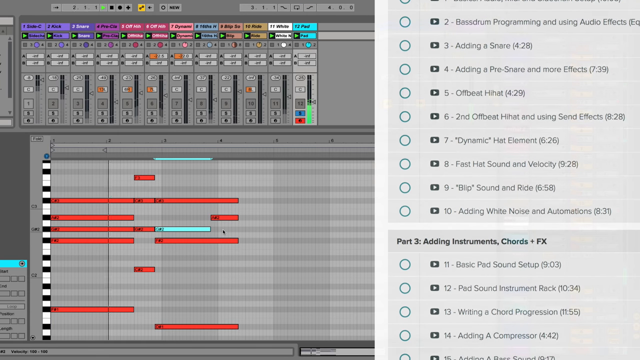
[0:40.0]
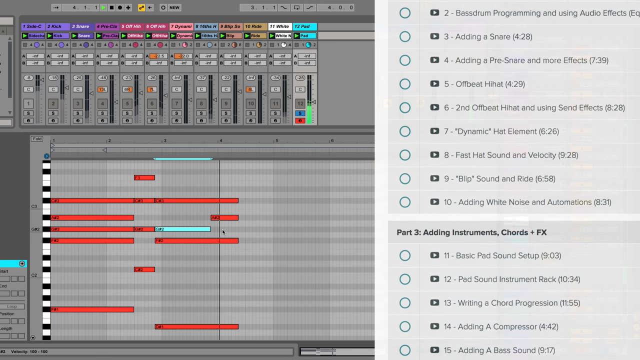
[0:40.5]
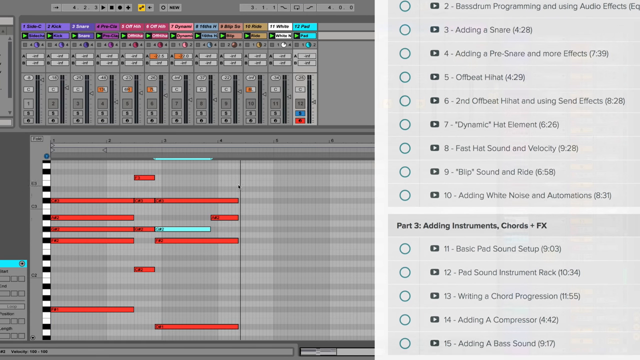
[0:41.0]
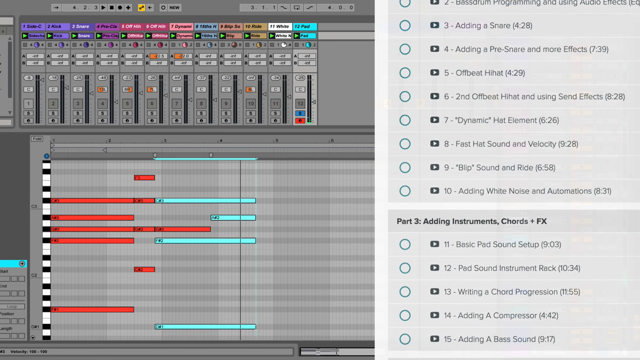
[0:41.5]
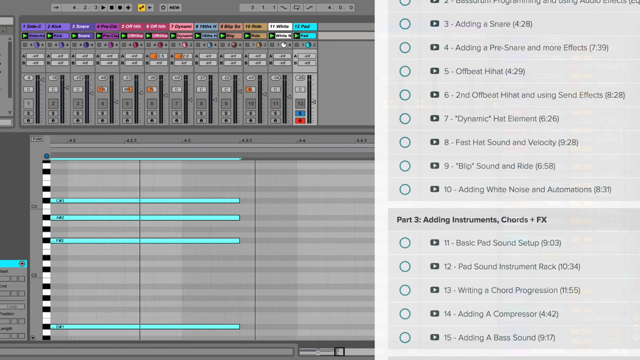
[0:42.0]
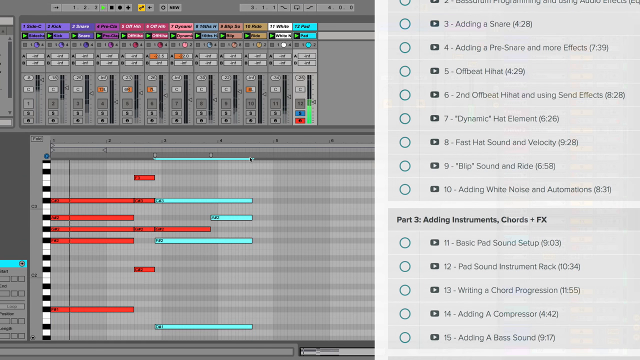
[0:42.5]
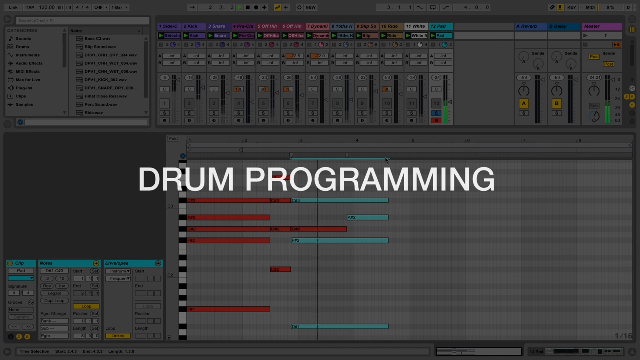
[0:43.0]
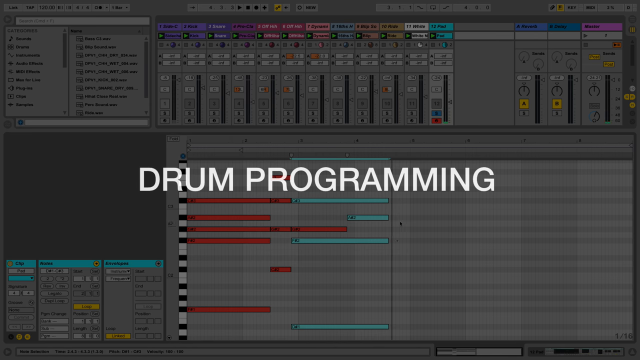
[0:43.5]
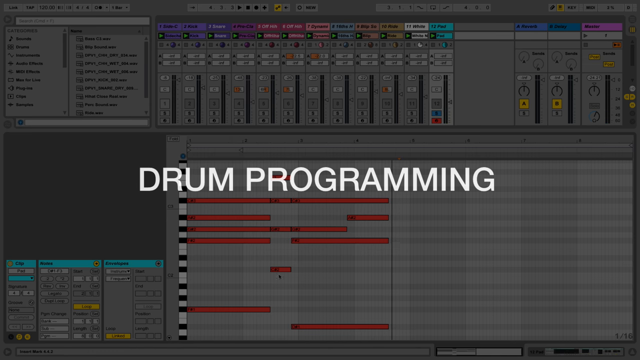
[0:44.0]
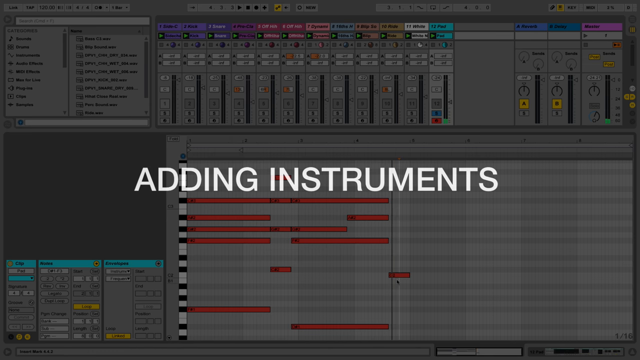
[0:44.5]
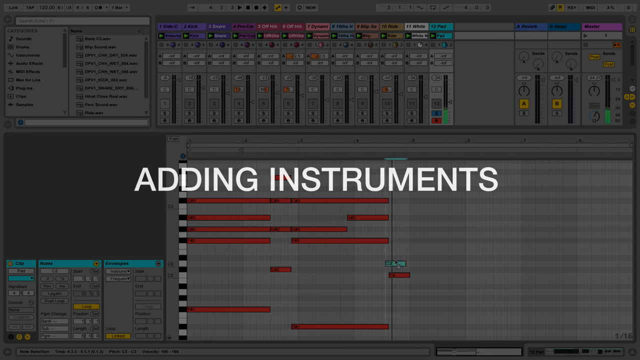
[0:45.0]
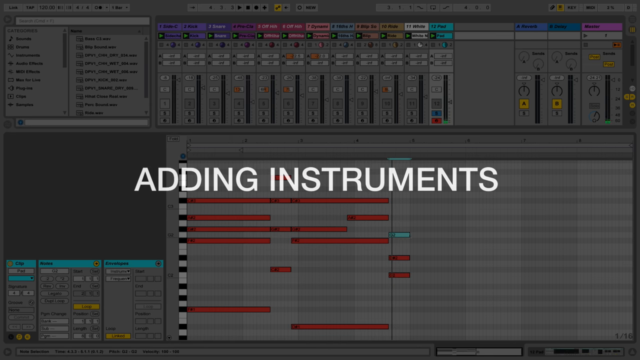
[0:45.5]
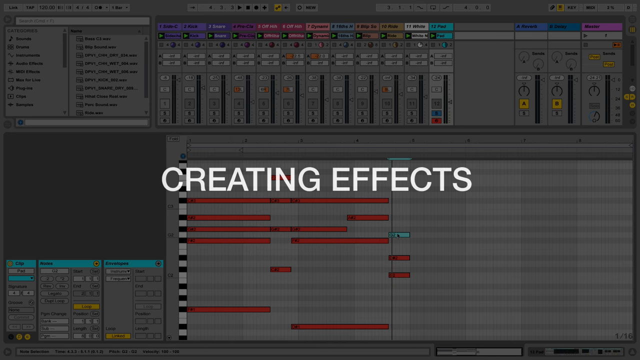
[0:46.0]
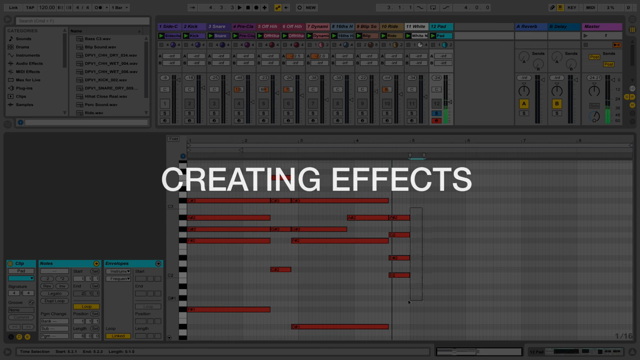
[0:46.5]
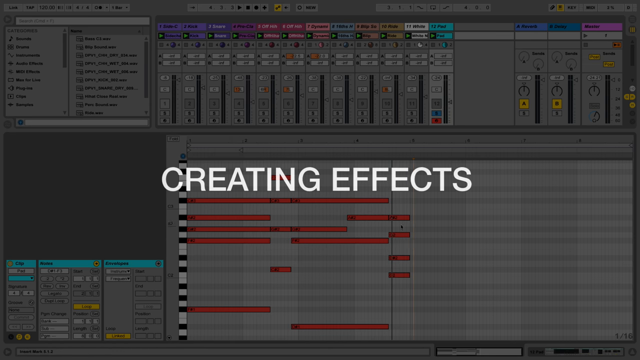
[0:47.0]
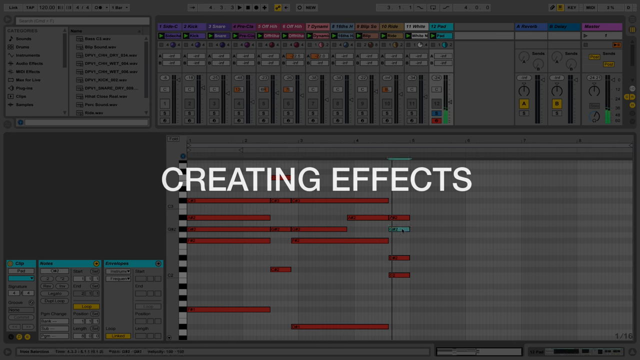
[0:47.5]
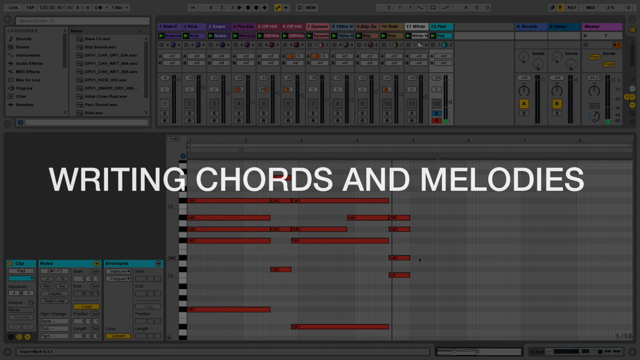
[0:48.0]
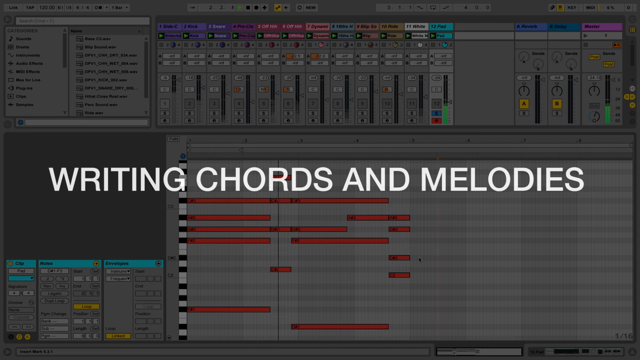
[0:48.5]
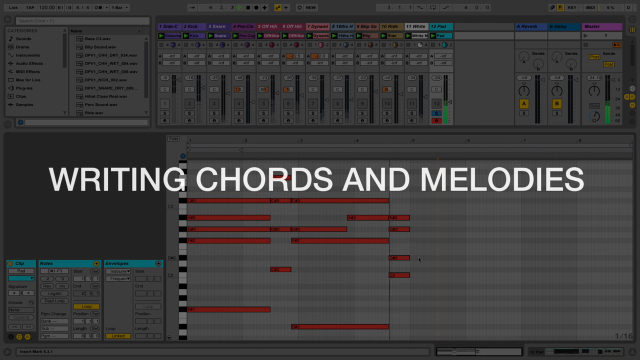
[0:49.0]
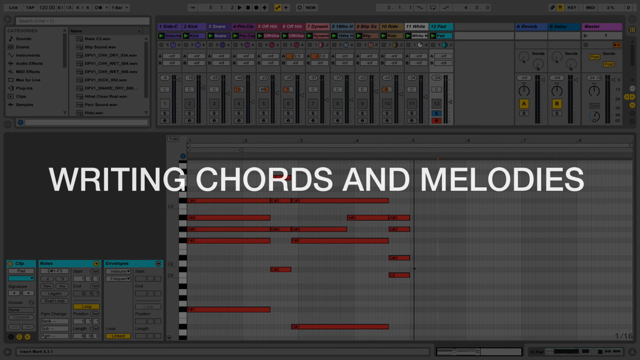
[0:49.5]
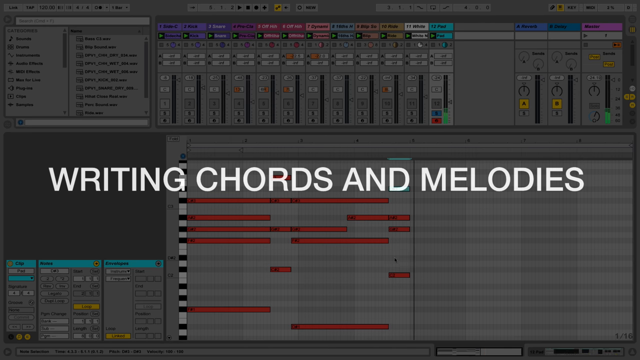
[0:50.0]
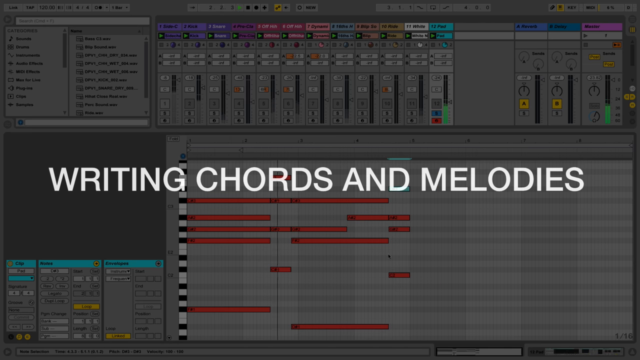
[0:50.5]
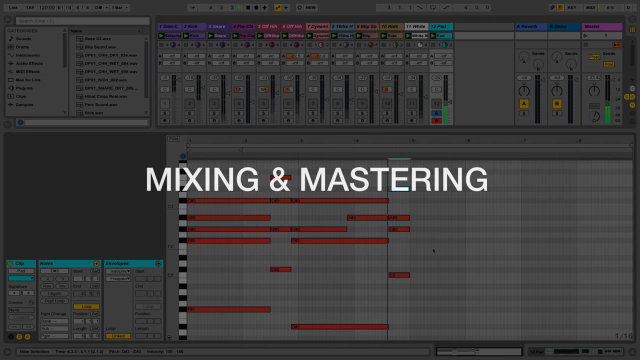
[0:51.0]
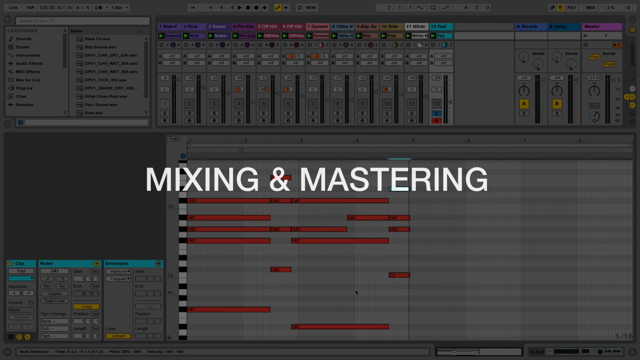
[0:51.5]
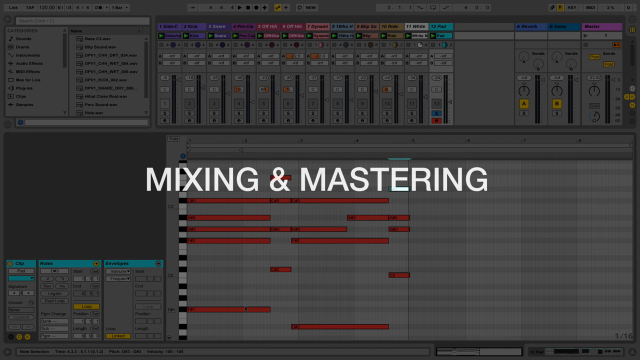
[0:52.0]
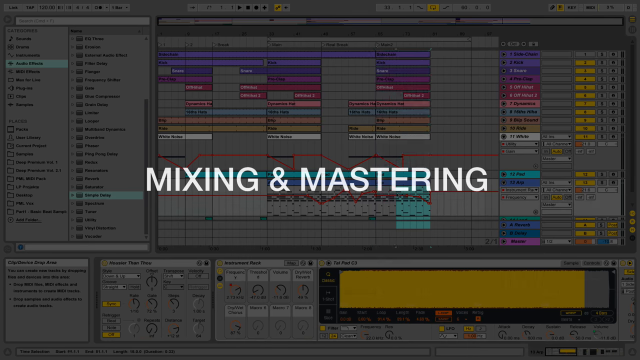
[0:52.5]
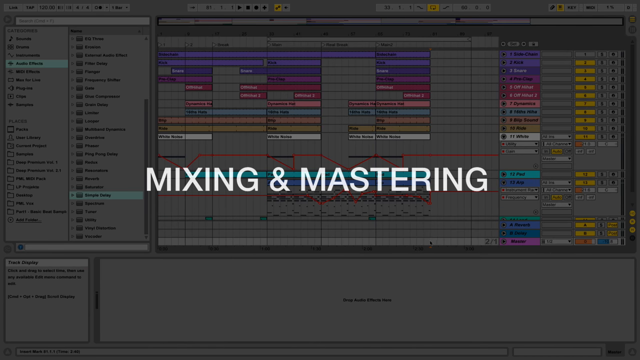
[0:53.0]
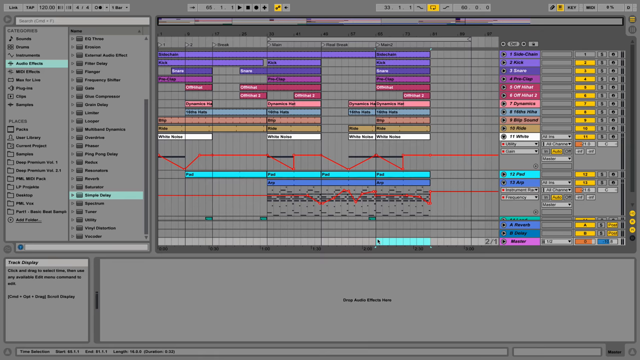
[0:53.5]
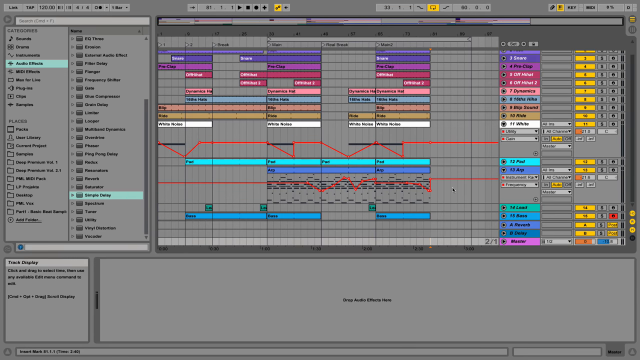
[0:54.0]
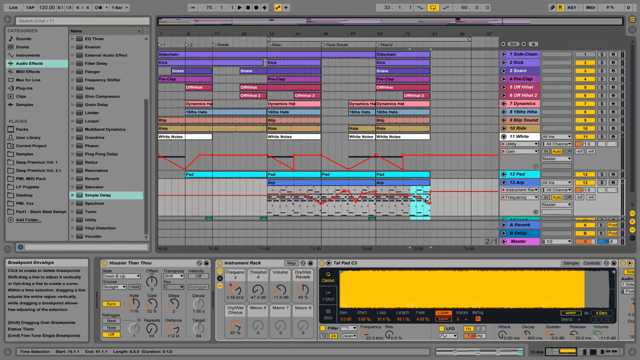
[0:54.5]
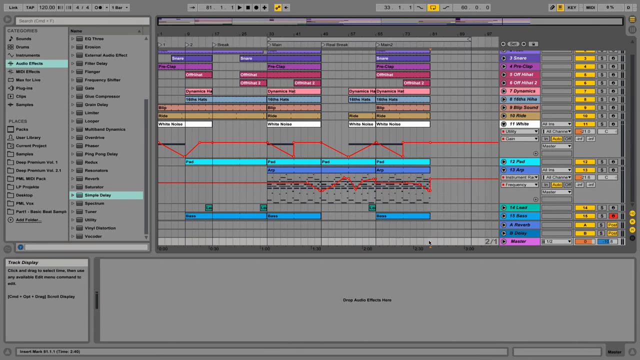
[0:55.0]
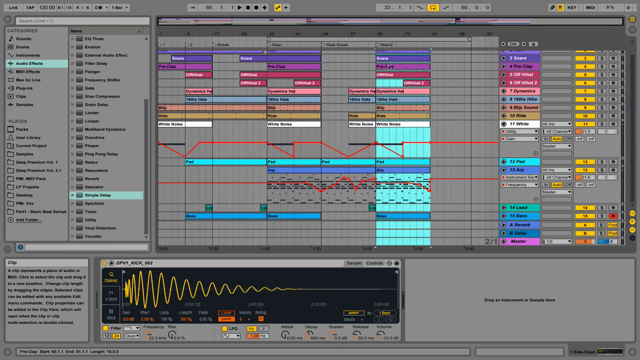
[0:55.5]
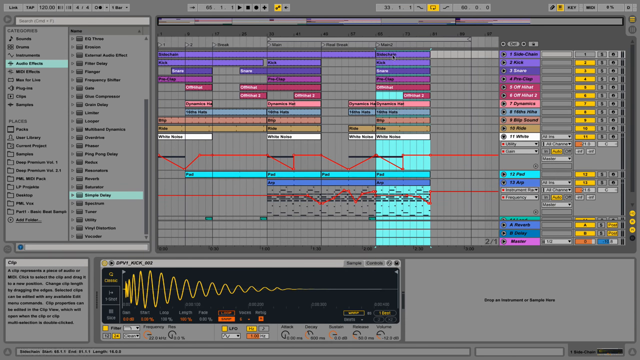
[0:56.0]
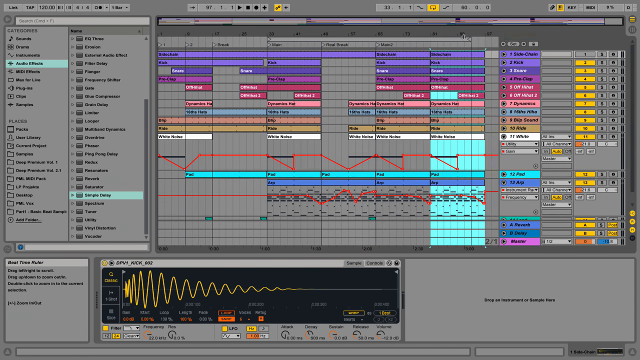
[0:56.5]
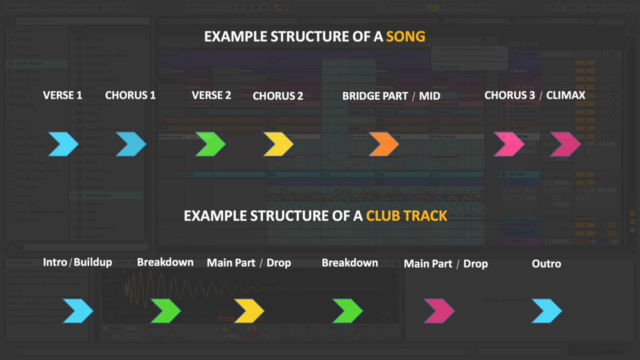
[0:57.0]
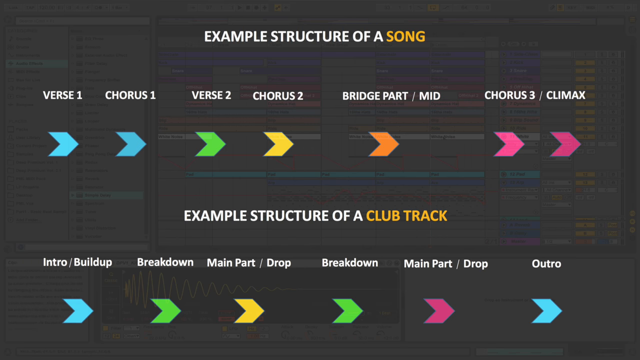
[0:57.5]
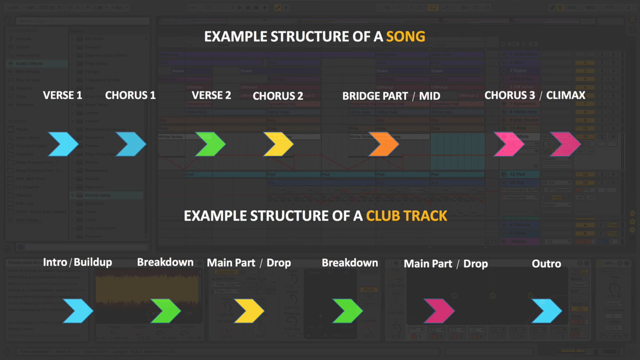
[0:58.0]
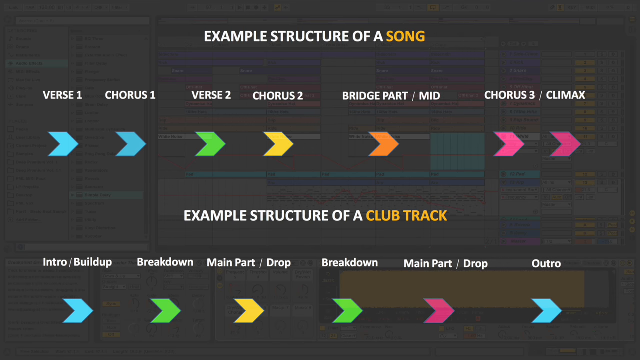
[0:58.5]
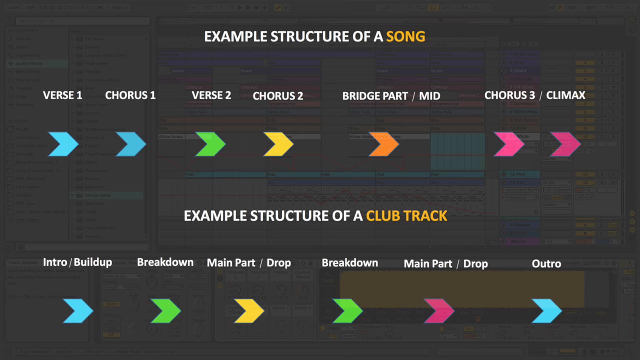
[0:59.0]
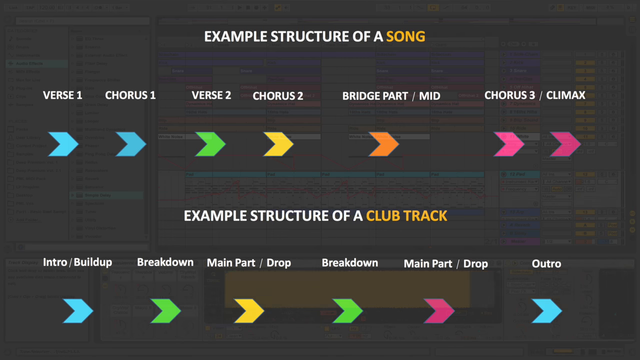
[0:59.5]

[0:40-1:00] More of the interface is shown, and on the far right-hand side, as the individual scrolls up, more of what to add for Part 1, 2, and 3 appears. A list of items then appears one every couple of seconds: drum programming, adding instruments, creating effects, writing chords and melodies, and mixing and mastering. Next, the individual operating the music application works swiftly in the app, though their face is not seen. A black background then shows two items: "Example Structure of a Song," which is color-coded, and below it "Example Structure of a Club Track," also color-coded.